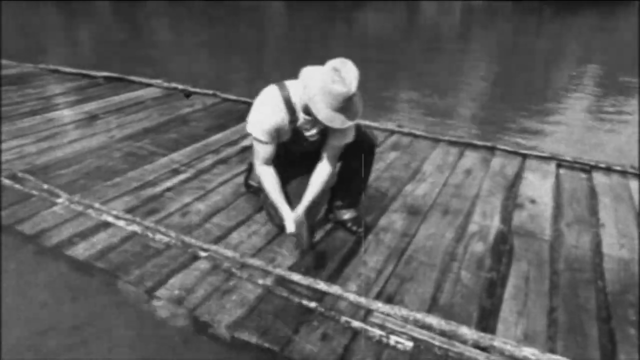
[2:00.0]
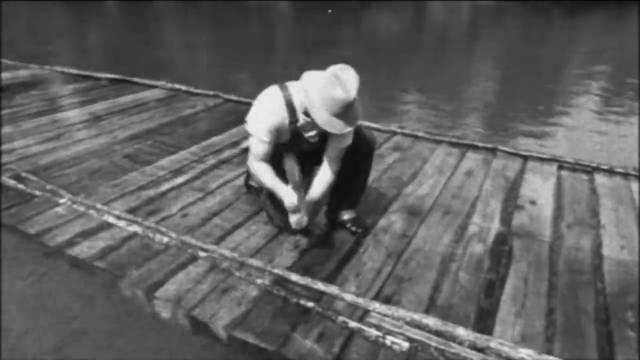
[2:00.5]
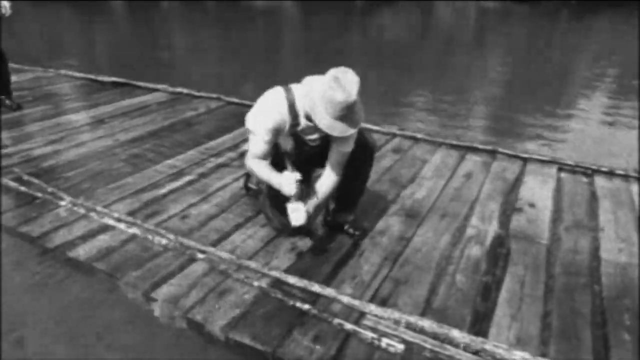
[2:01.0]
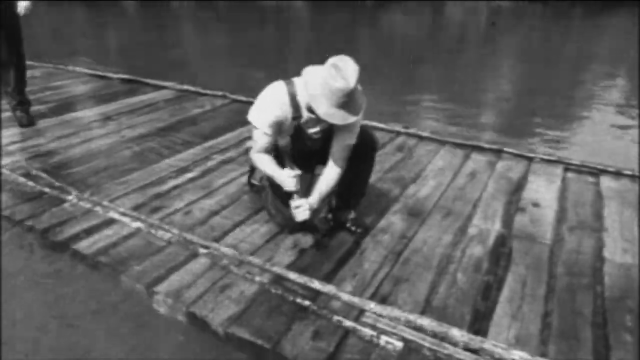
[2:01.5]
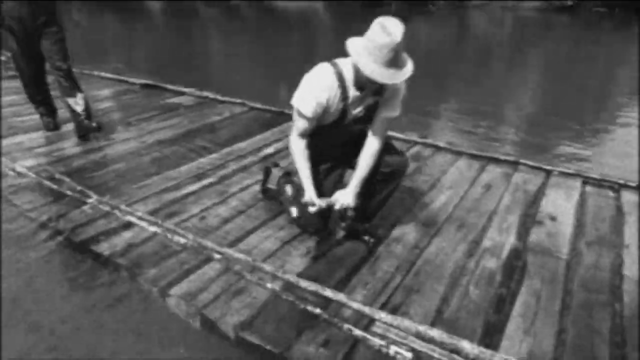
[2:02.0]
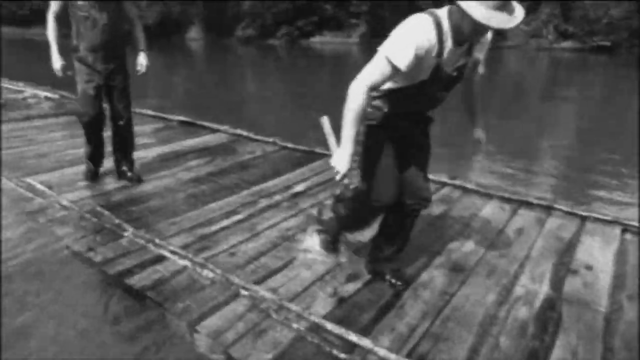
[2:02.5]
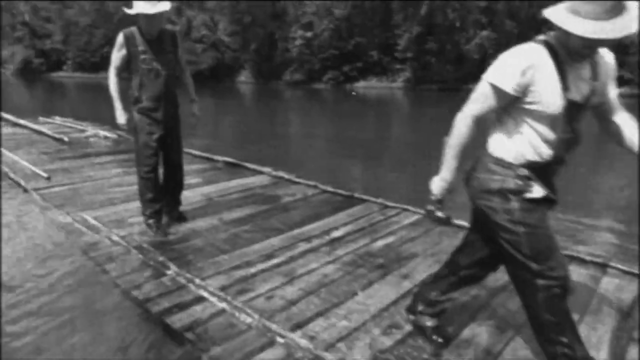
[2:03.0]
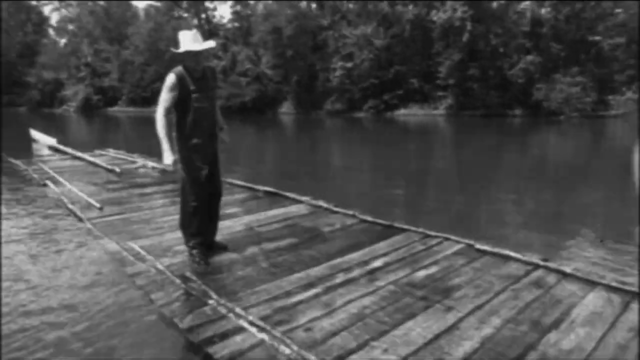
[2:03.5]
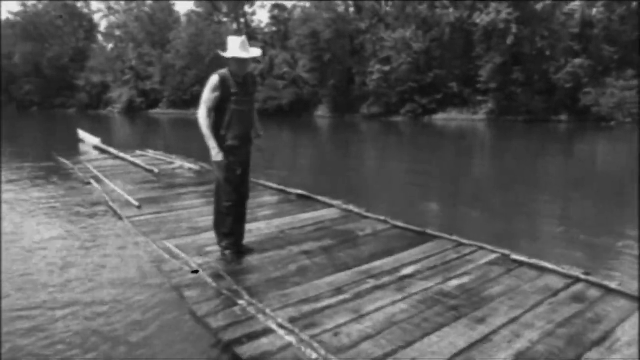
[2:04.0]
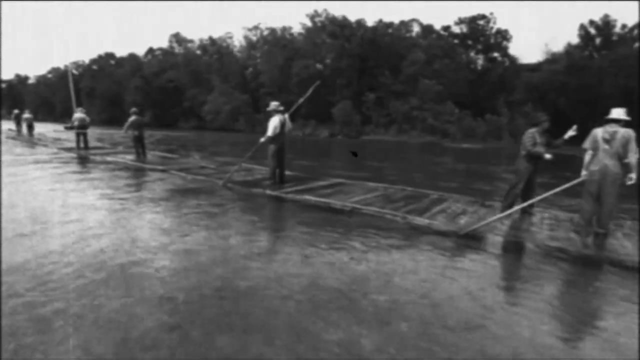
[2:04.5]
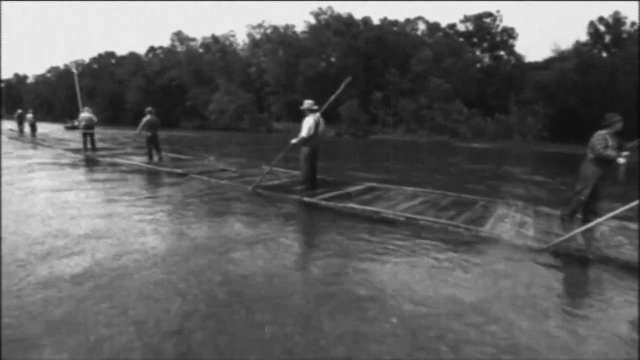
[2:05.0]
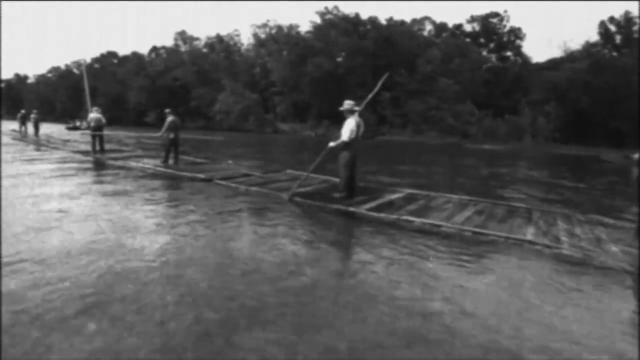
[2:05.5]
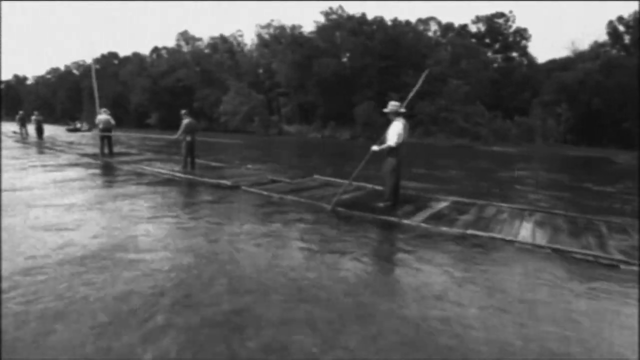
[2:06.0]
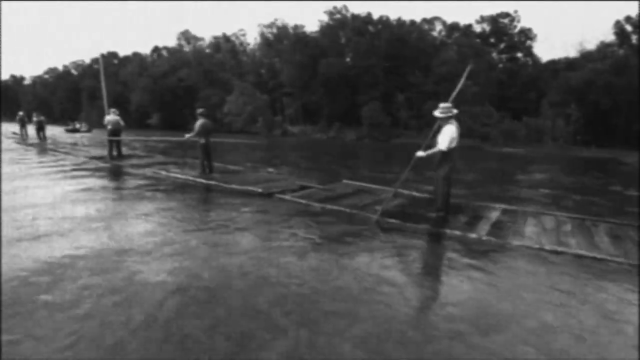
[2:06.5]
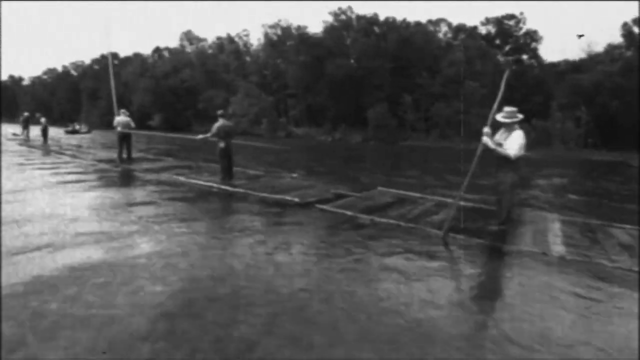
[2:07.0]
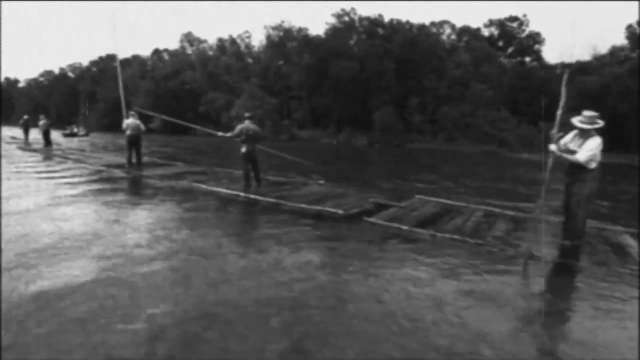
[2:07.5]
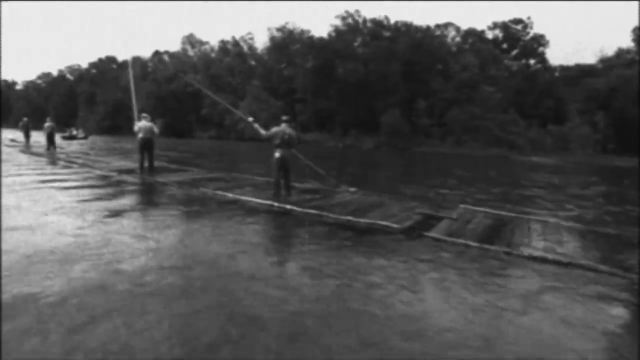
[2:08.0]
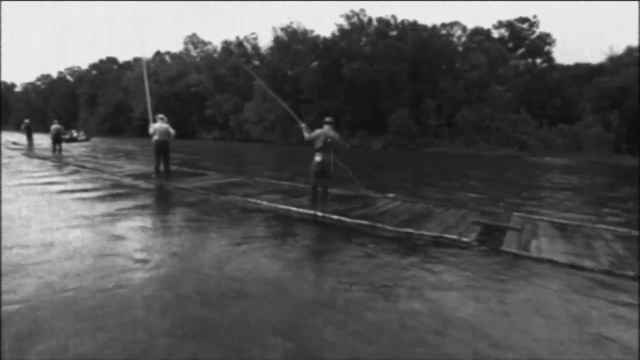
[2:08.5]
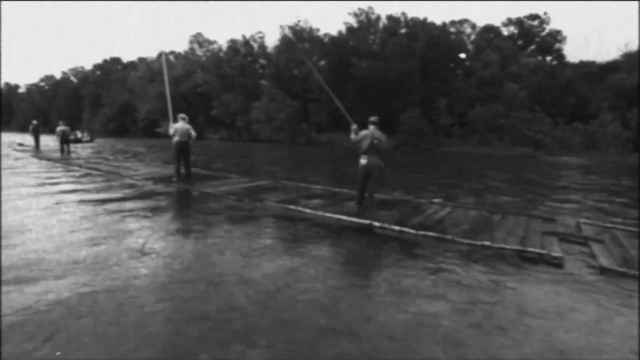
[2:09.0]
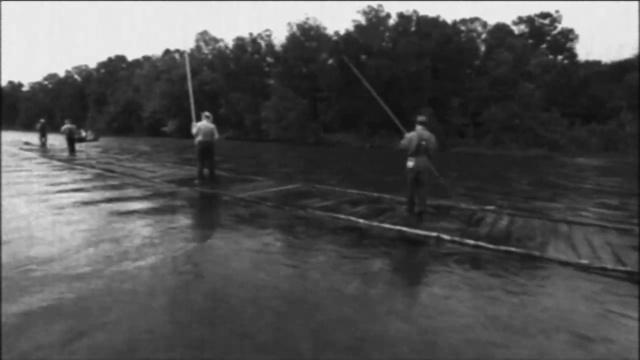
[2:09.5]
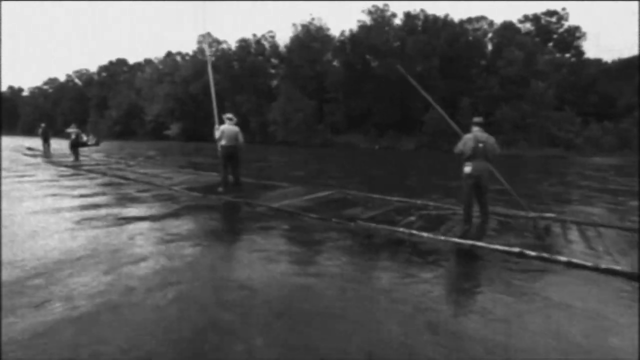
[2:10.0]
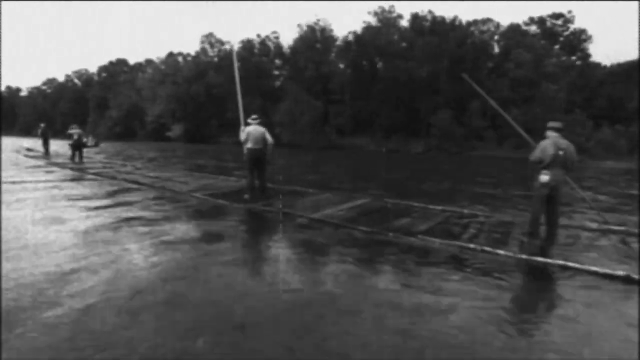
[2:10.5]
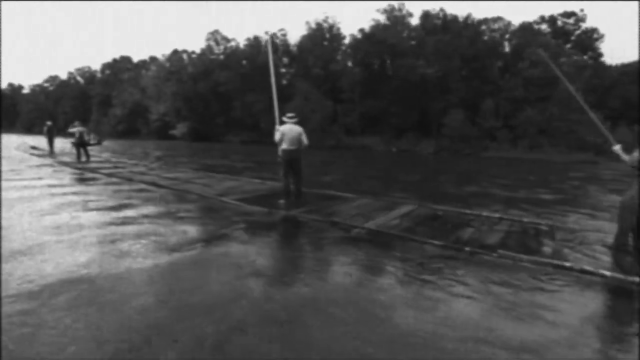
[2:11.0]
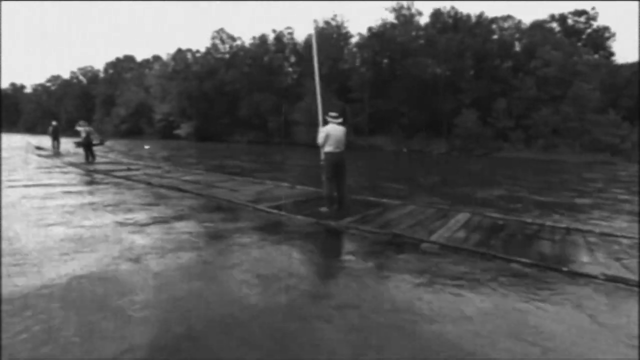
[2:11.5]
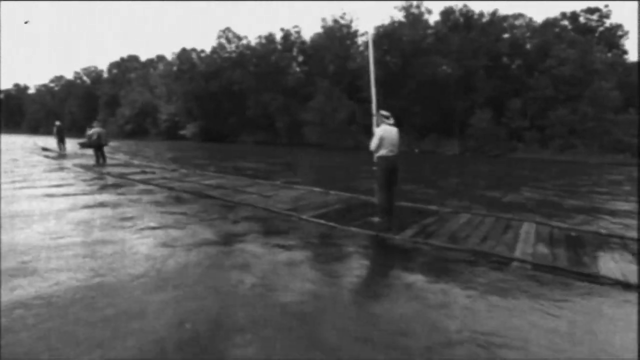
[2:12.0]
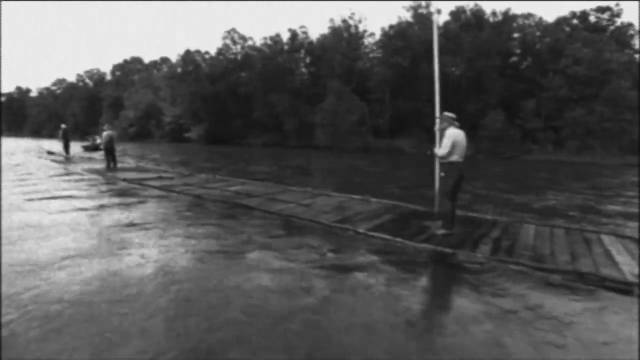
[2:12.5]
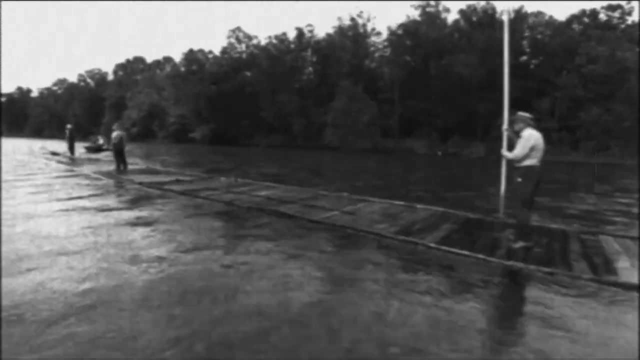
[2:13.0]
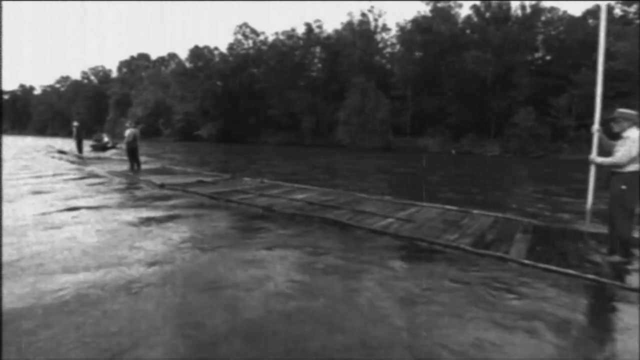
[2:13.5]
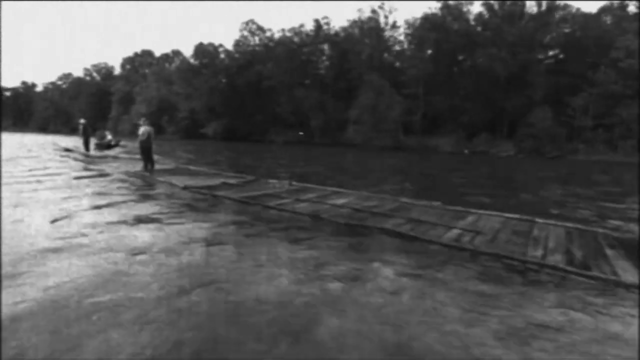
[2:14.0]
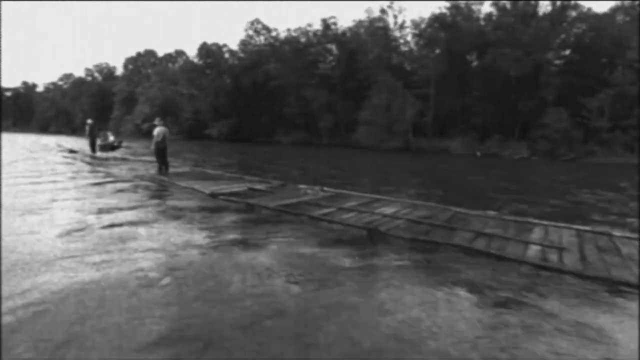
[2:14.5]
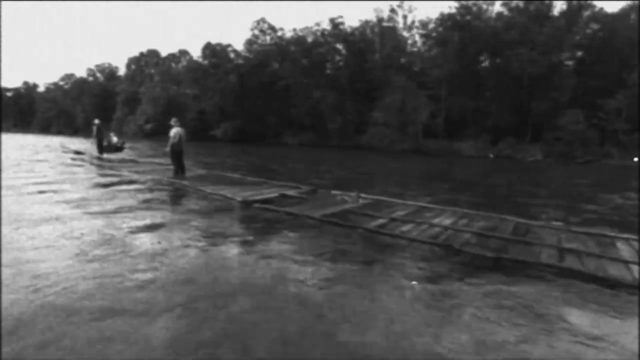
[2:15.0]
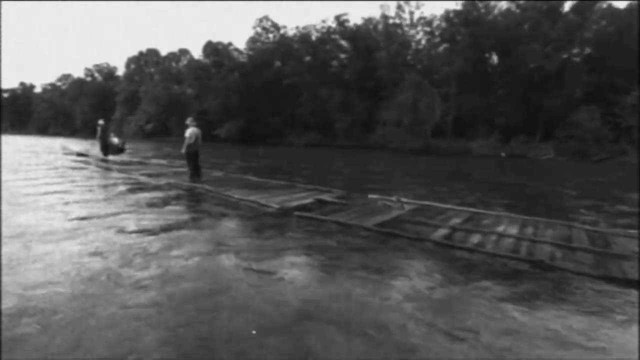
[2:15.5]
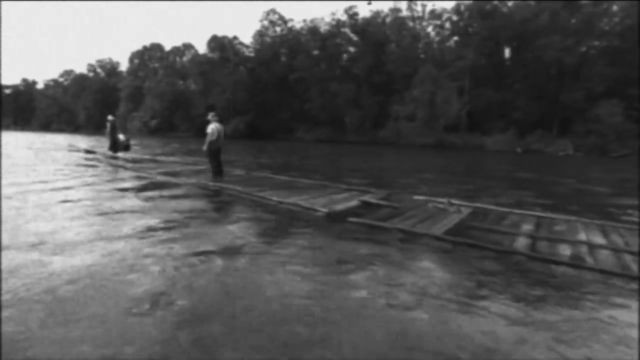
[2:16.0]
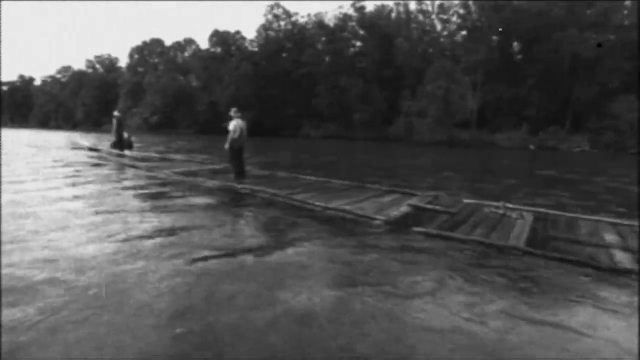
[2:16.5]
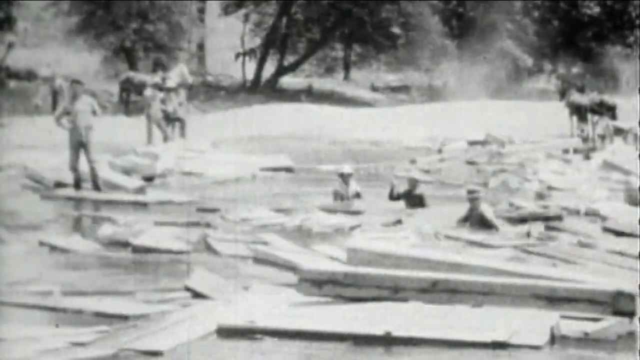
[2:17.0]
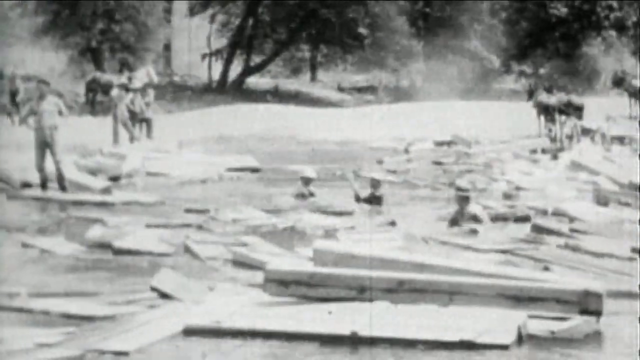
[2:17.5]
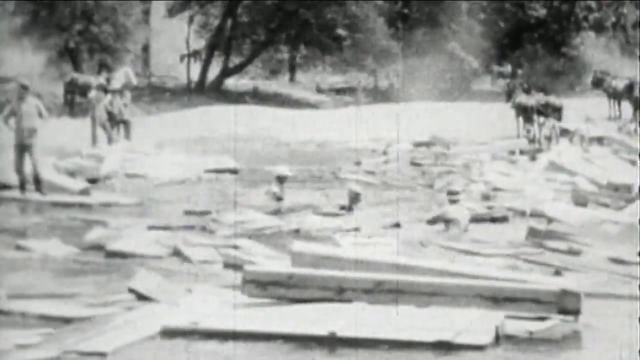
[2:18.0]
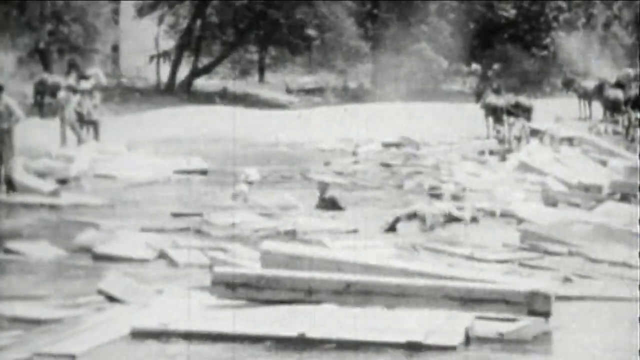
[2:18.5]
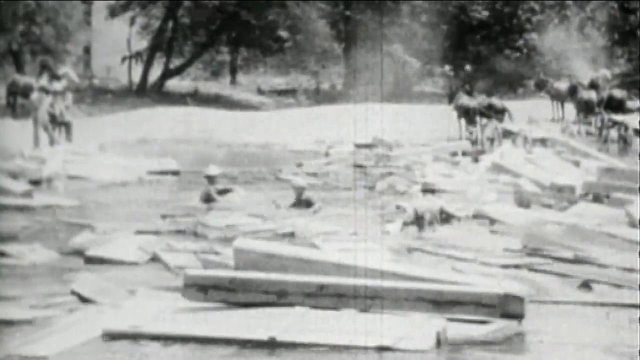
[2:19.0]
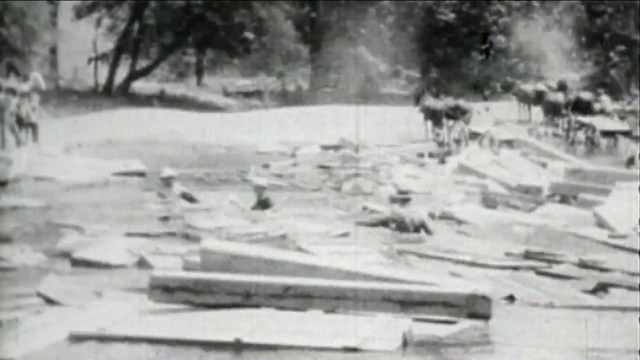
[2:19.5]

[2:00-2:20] In black-and-white footage, workers in overalls work on the wooden bridge, still hammering. They have big poles on them, for an unclear purpose. The bridge is long and goes across the river, and it is not finished yet. More logs float in the river as the workers gather them up, apparently to use as material for the bridge.